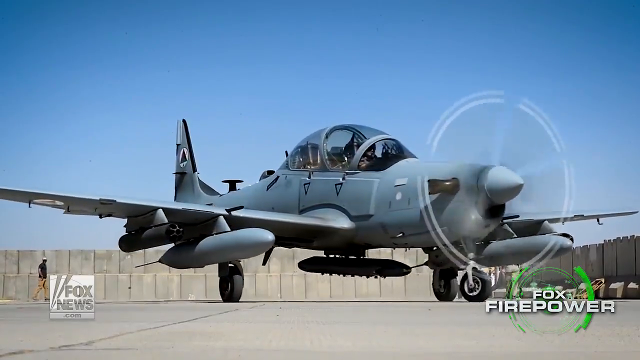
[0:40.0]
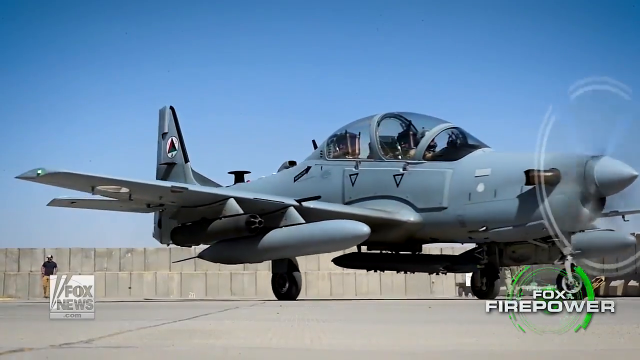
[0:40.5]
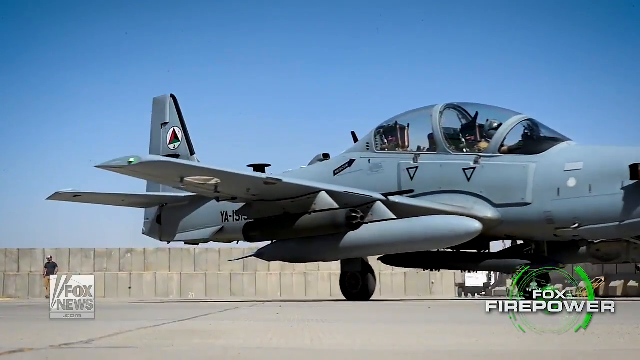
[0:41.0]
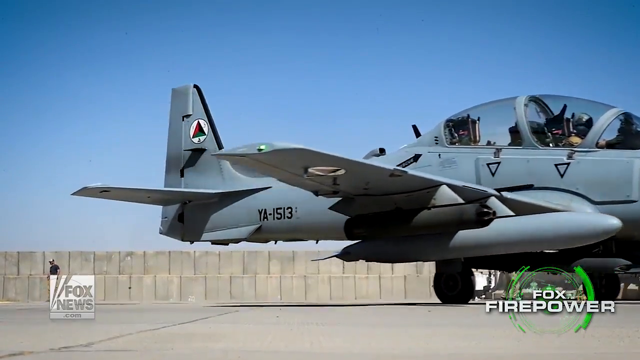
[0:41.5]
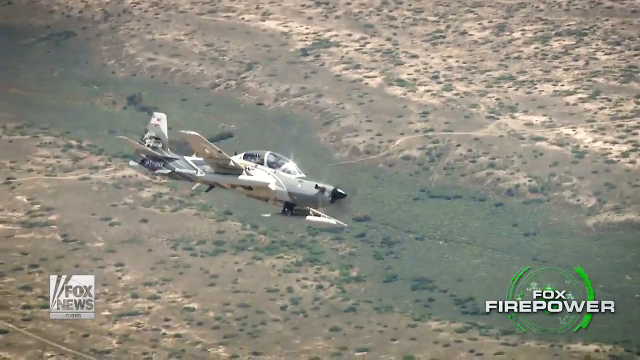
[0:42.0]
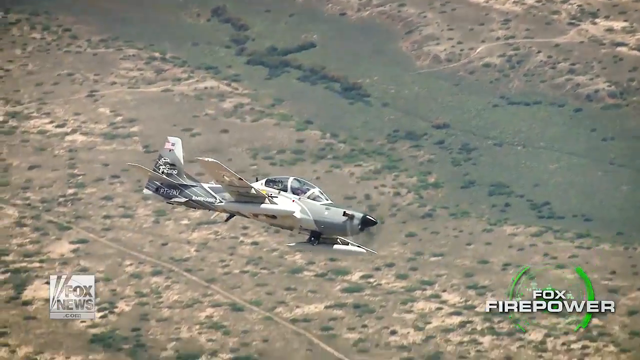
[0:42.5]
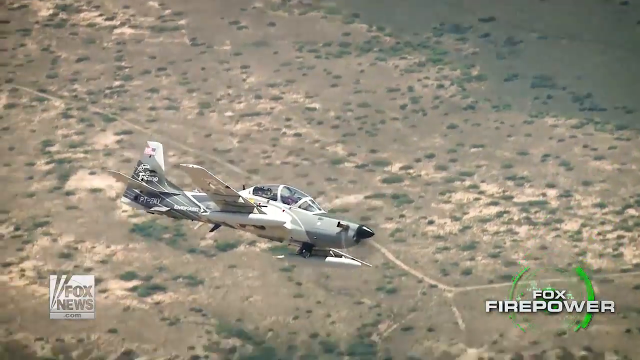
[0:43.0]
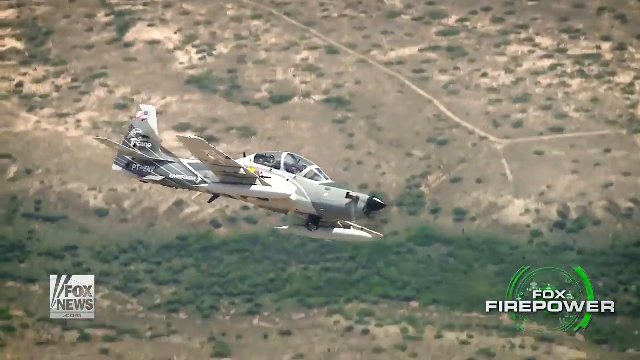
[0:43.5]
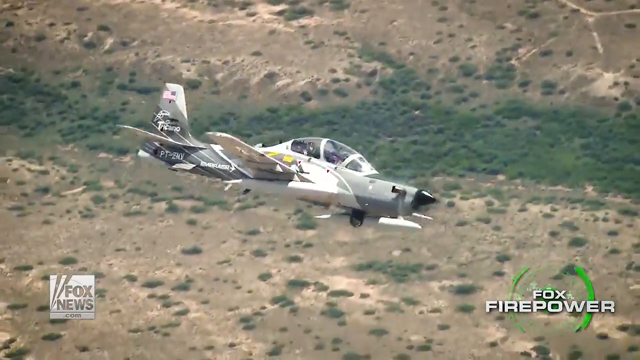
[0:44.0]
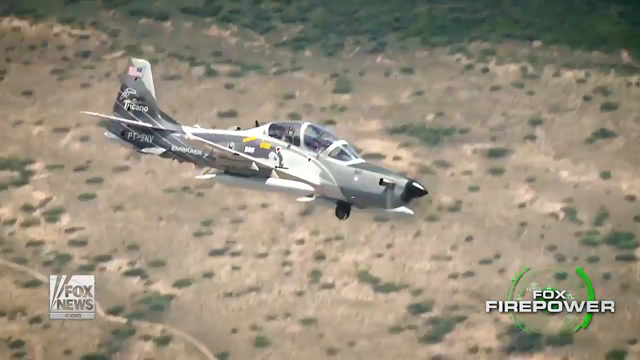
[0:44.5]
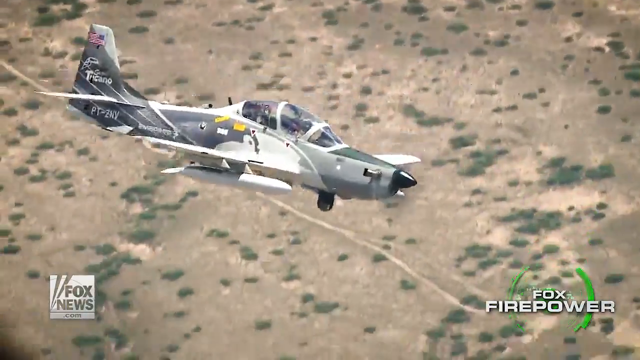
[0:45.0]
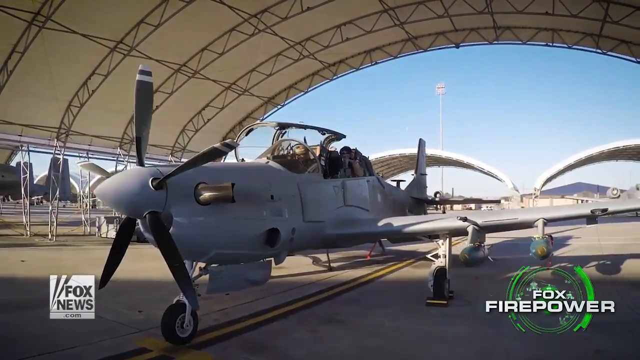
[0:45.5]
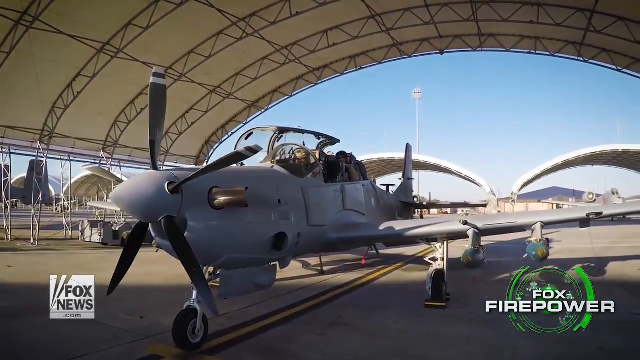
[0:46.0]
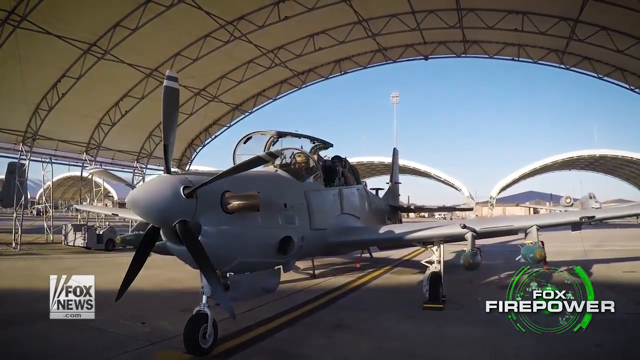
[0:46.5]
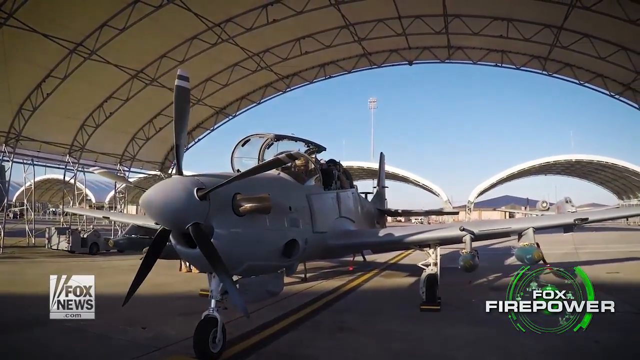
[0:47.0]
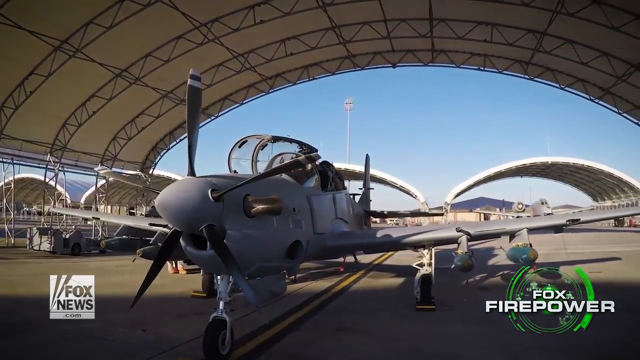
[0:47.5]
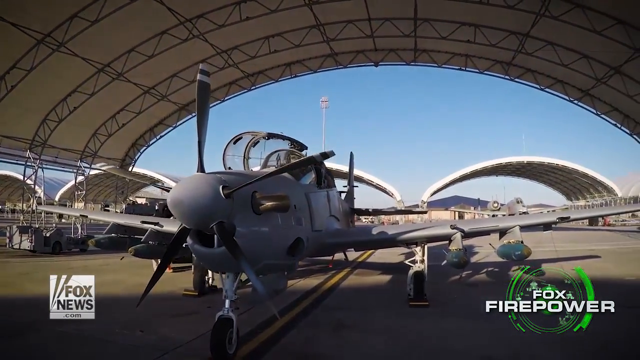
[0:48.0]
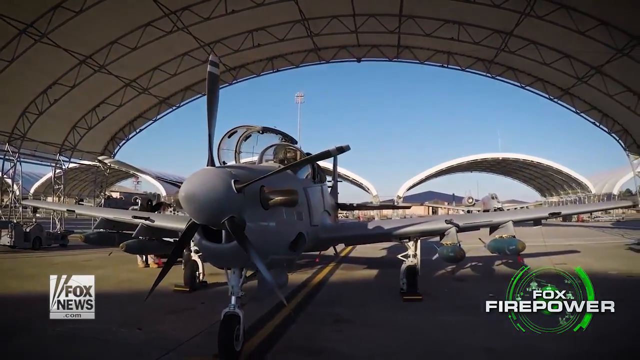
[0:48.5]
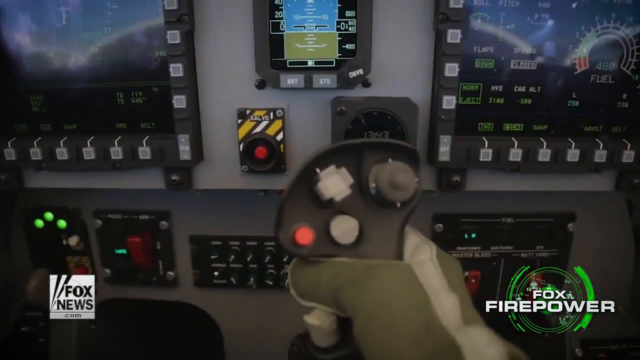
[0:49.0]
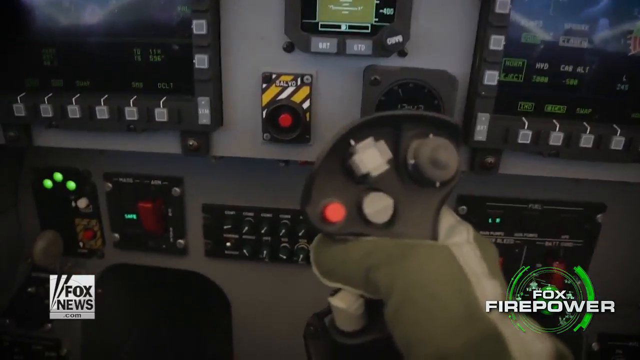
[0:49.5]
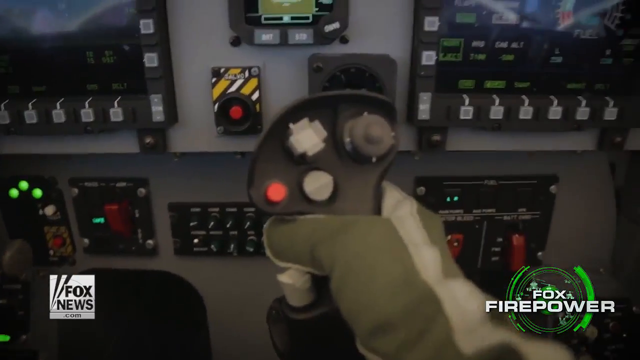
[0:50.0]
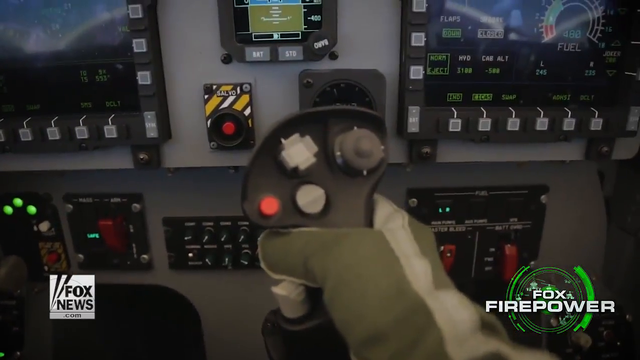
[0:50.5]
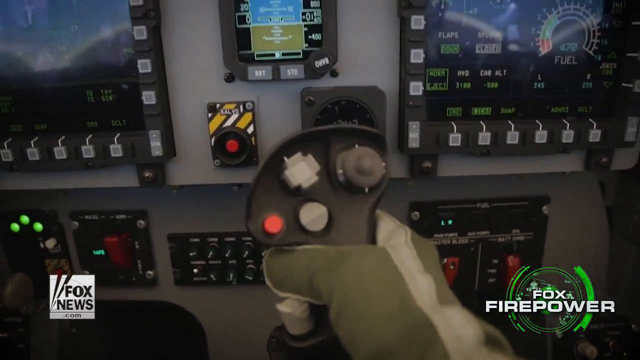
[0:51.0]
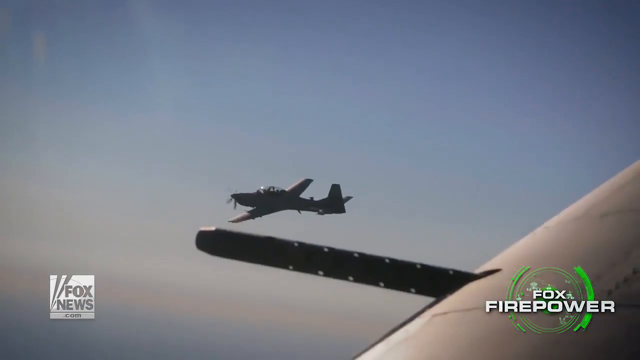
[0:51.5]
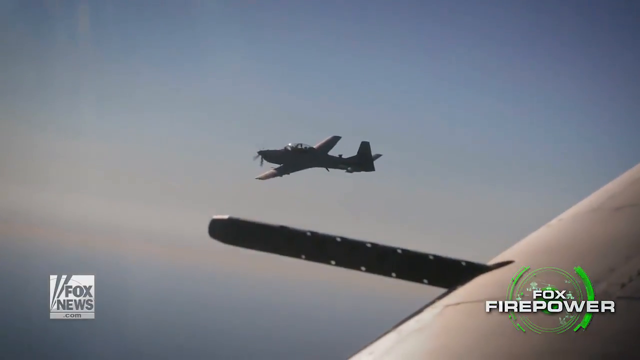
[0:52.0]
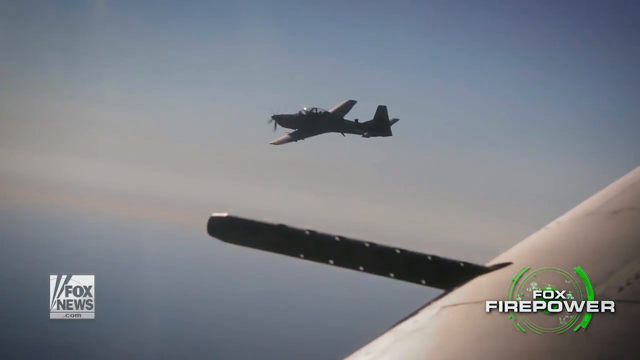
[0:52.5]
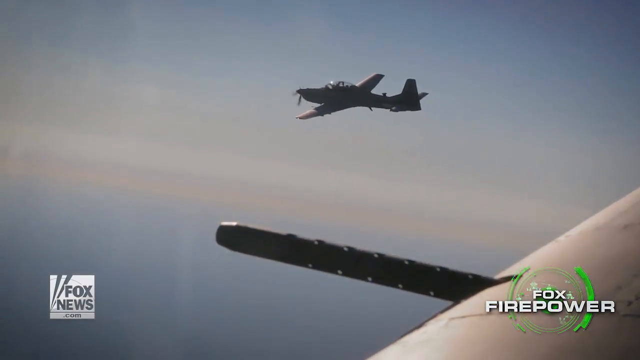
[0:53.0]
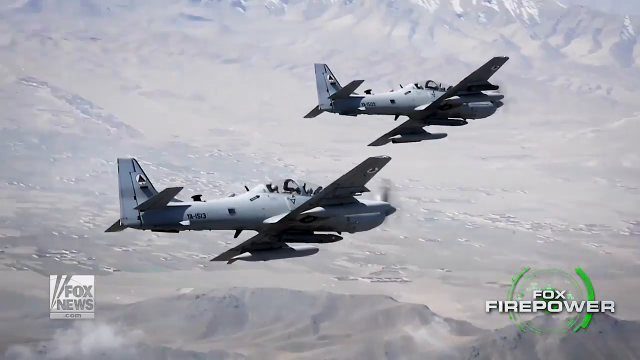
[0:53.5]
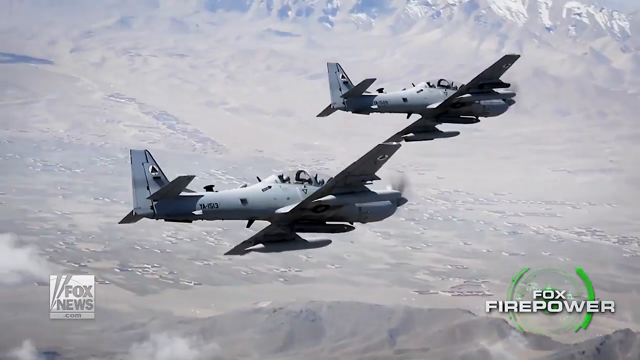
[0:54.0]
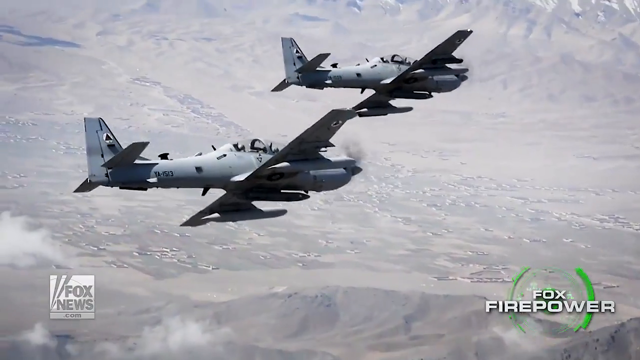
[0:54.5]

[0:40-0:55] A plane moves through a very deserted area, then two other planes move in the sky in the same sequence. A plane is on land in a parking area and looks like it is about to move; it is white with black fans, and its inside looks very compact. Someone in that plane is apparently trying to start it. The parking area is very wide, with a lot of space. The sky and clouds are visible, and the land and grass are shown from very far away, looking like a healthy green area. The crews are possibly training or going on a mission.